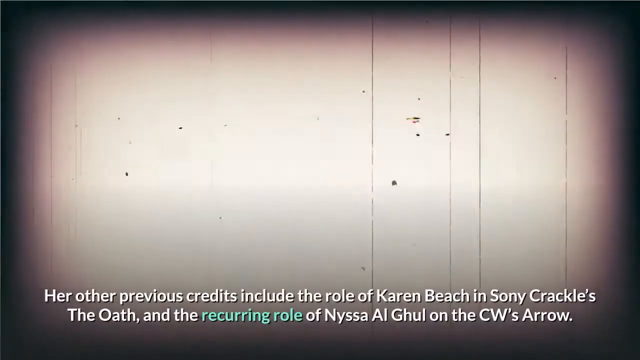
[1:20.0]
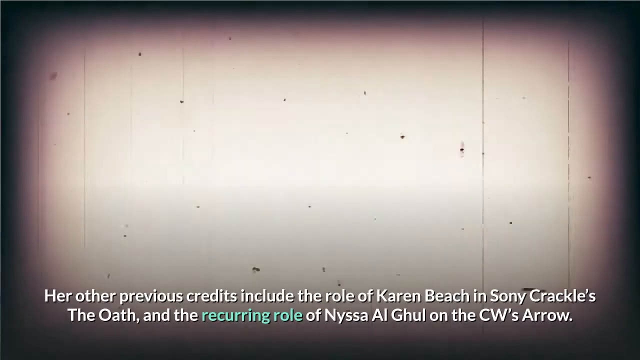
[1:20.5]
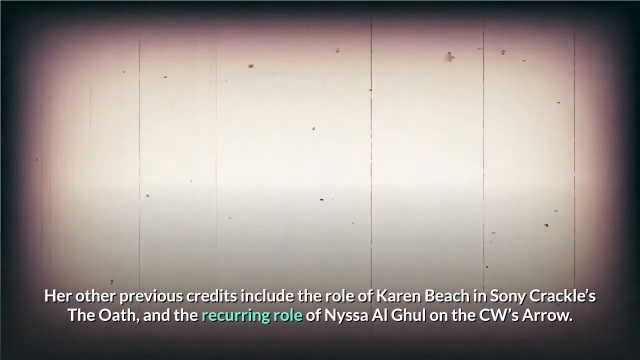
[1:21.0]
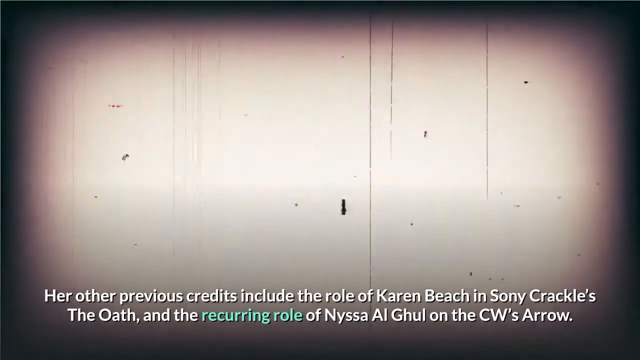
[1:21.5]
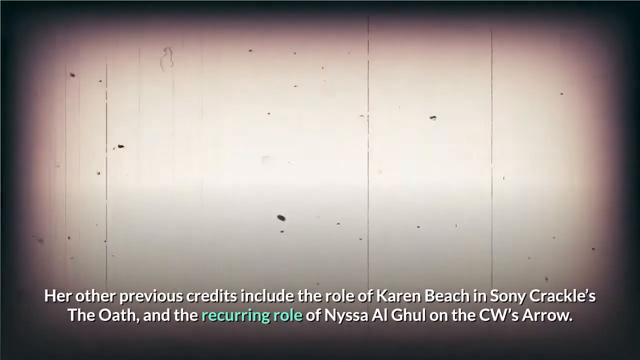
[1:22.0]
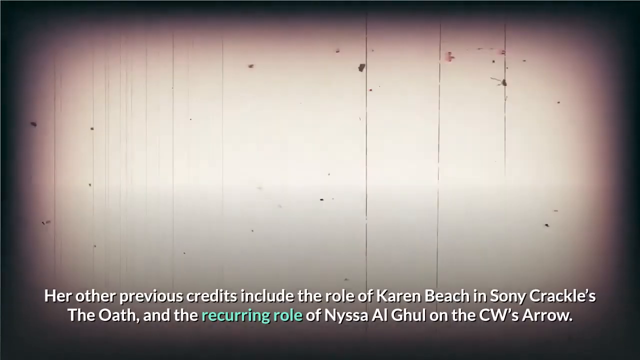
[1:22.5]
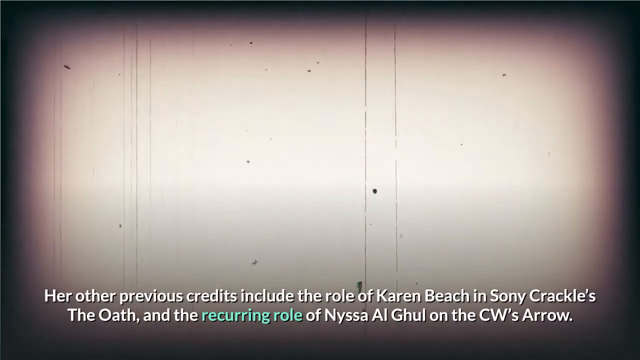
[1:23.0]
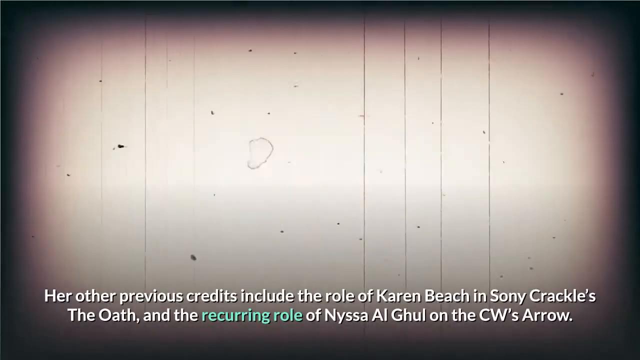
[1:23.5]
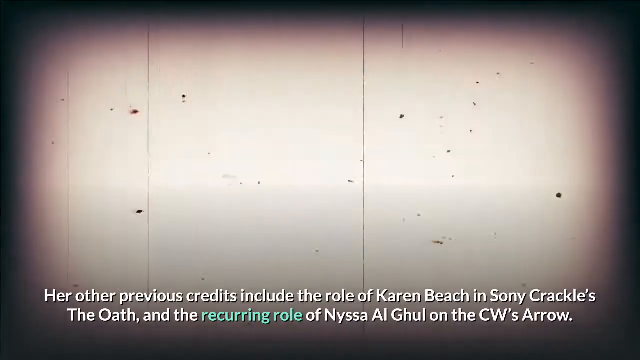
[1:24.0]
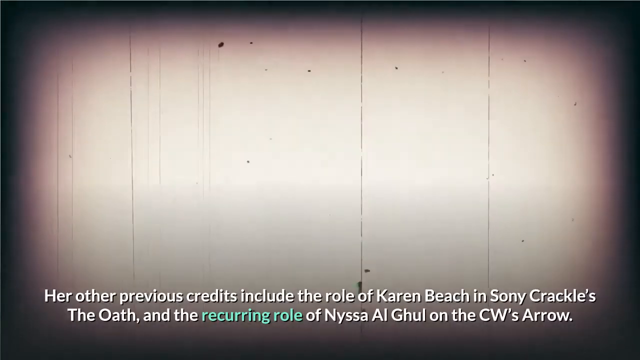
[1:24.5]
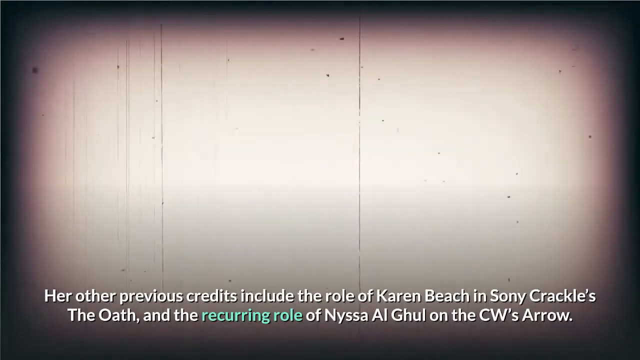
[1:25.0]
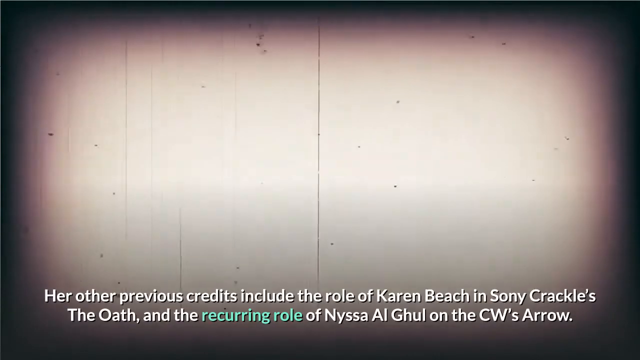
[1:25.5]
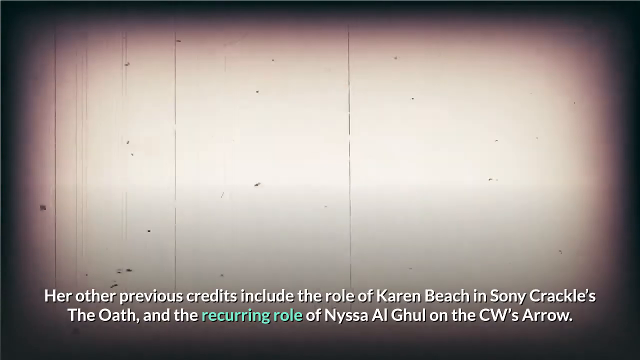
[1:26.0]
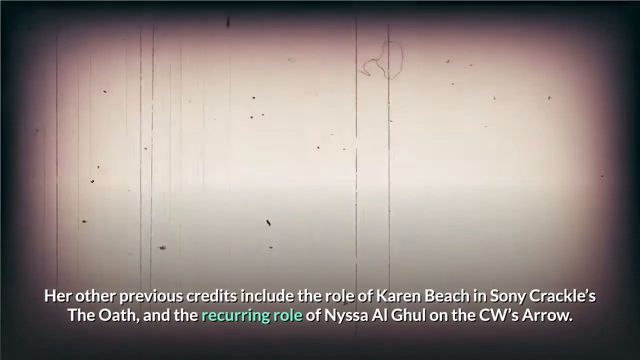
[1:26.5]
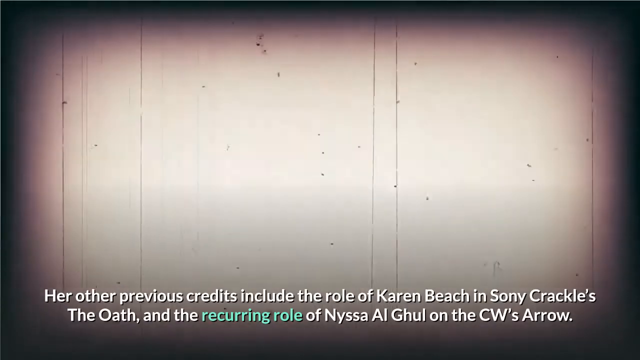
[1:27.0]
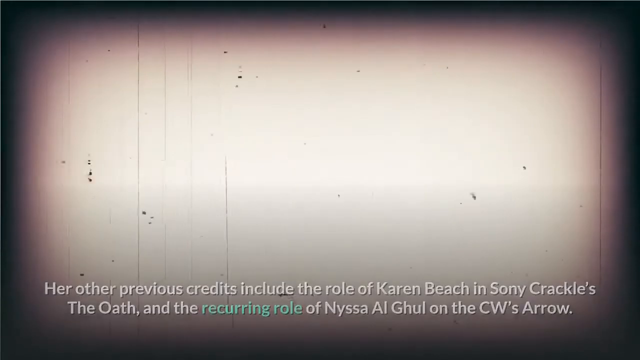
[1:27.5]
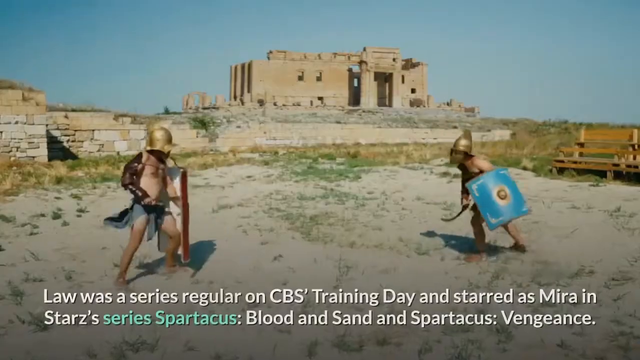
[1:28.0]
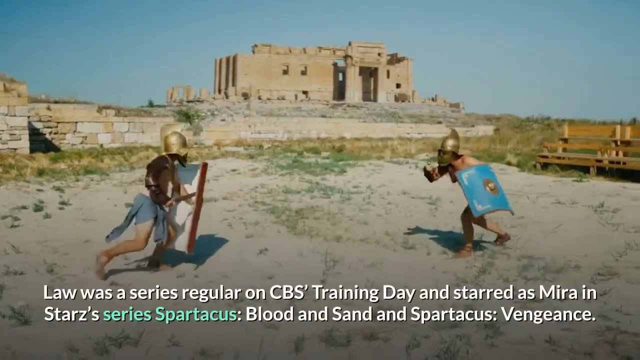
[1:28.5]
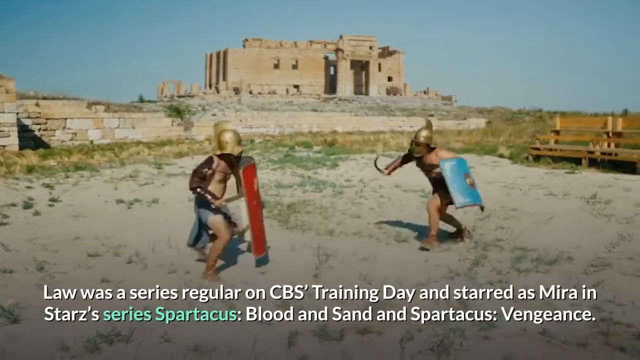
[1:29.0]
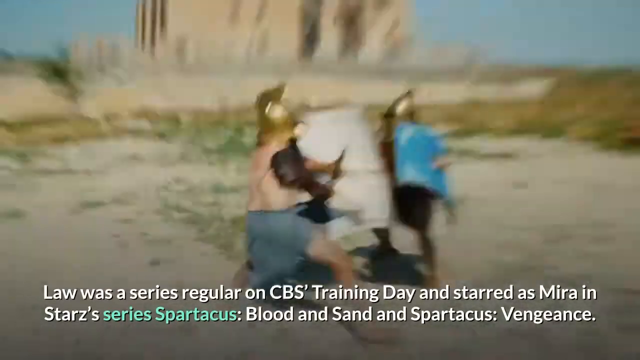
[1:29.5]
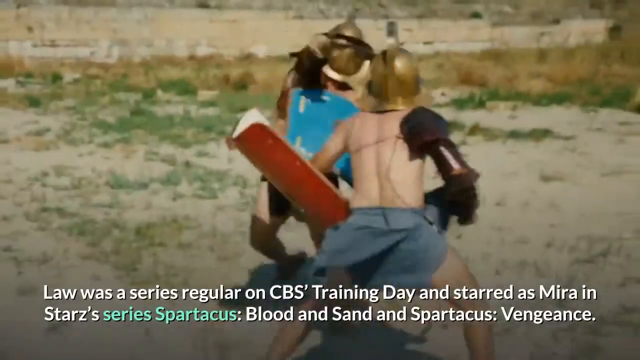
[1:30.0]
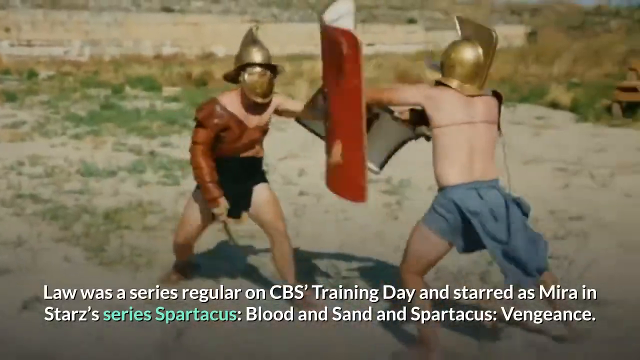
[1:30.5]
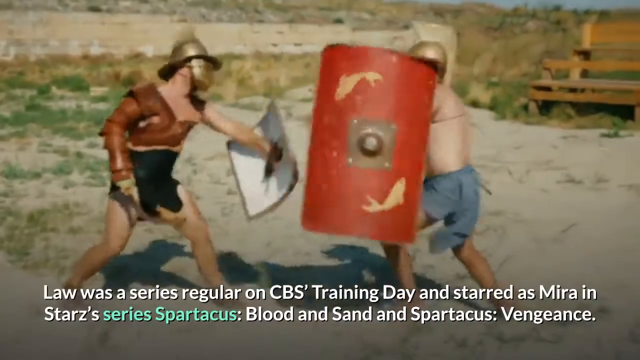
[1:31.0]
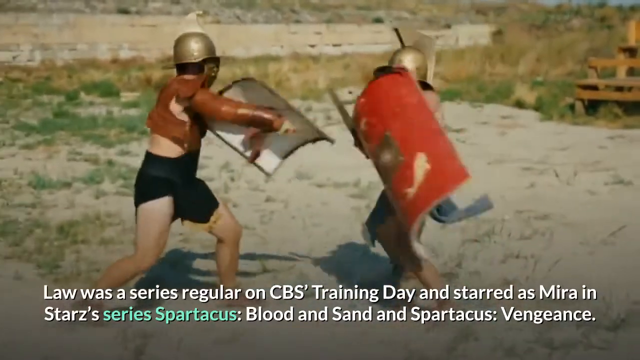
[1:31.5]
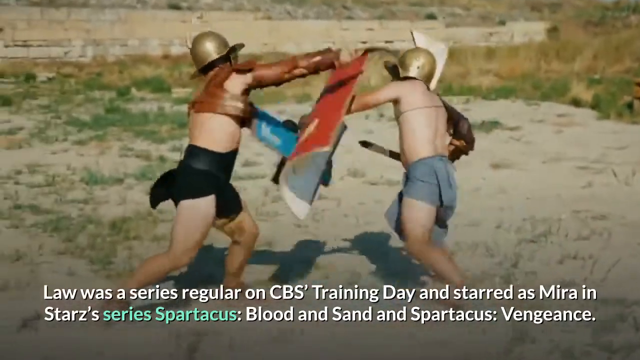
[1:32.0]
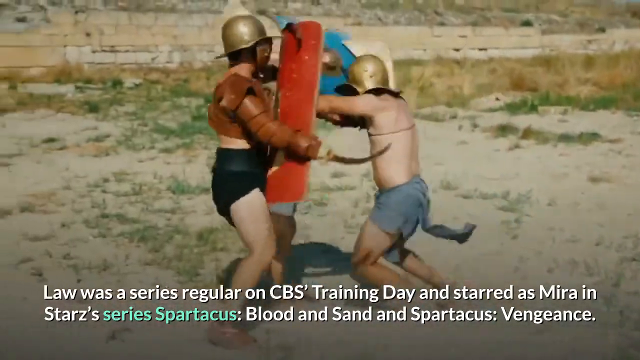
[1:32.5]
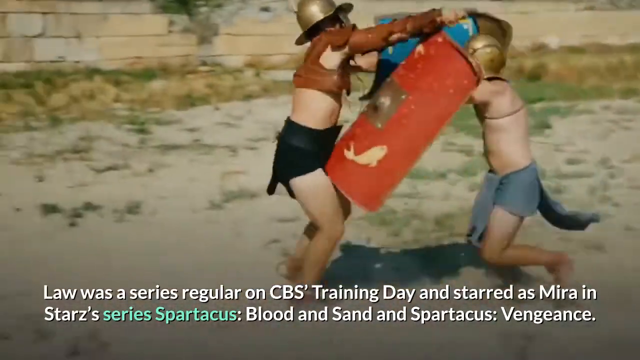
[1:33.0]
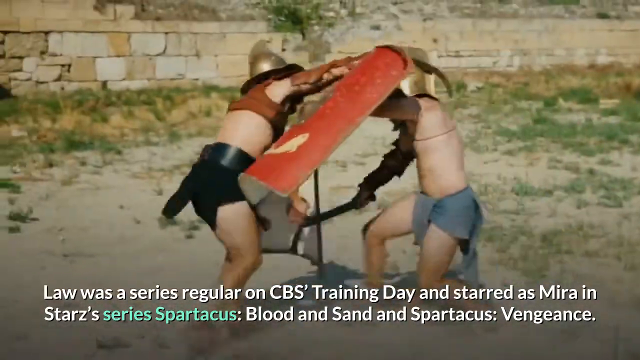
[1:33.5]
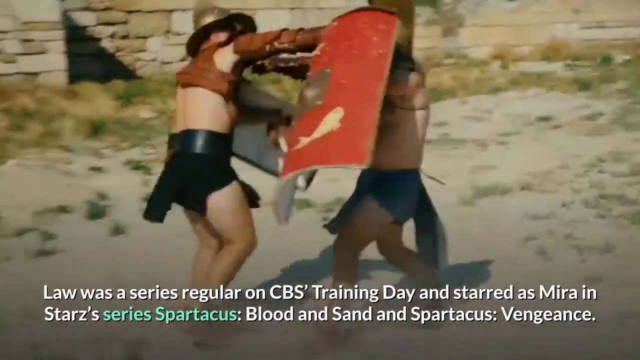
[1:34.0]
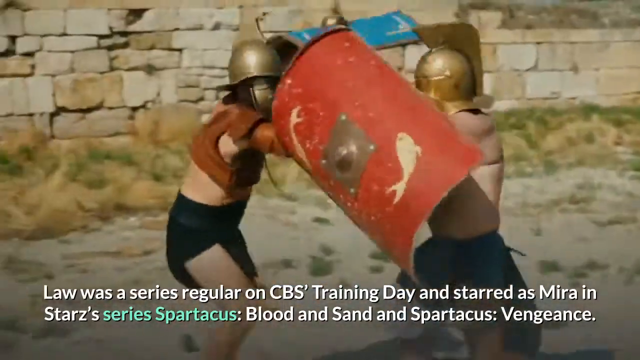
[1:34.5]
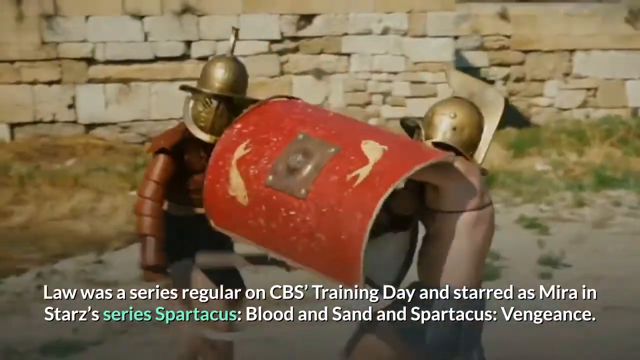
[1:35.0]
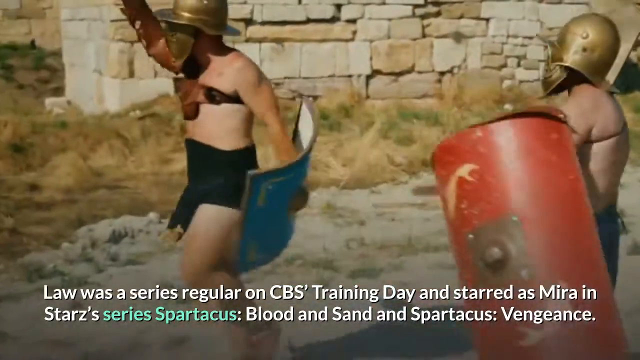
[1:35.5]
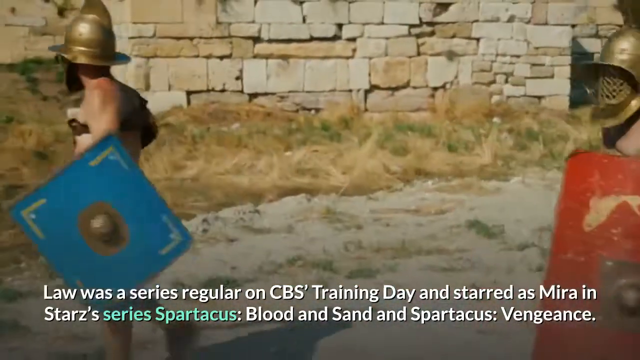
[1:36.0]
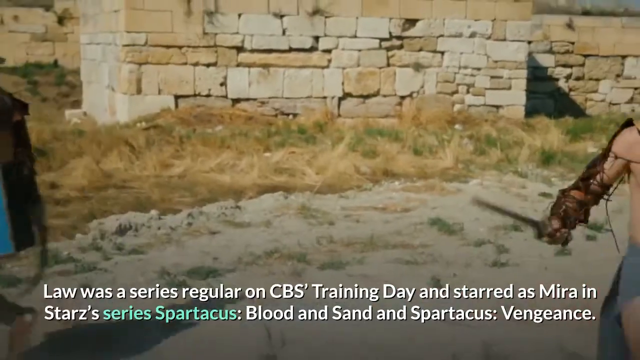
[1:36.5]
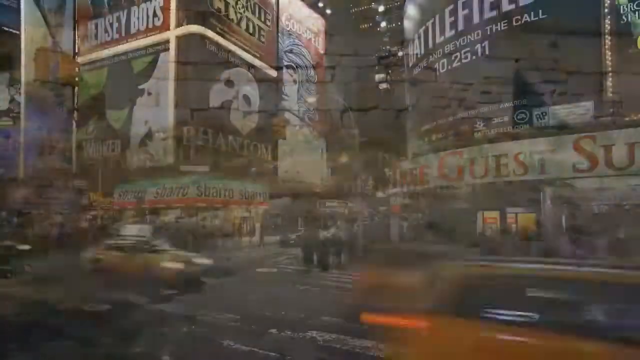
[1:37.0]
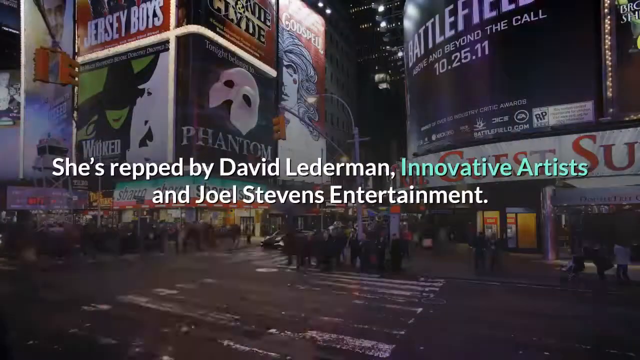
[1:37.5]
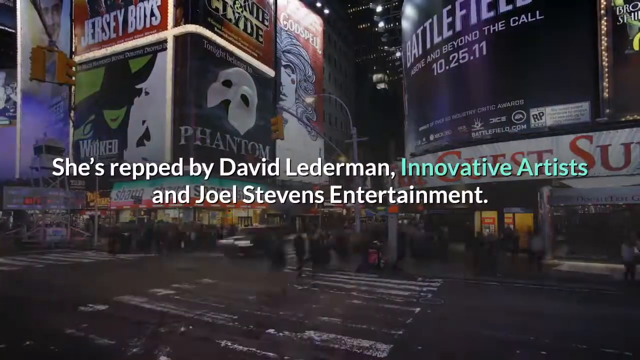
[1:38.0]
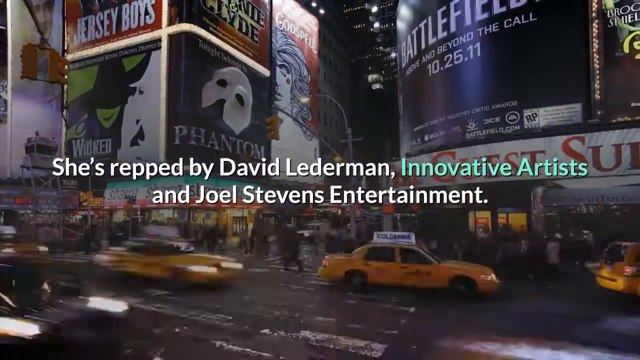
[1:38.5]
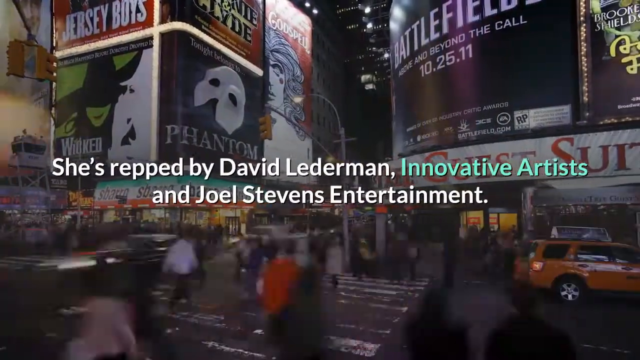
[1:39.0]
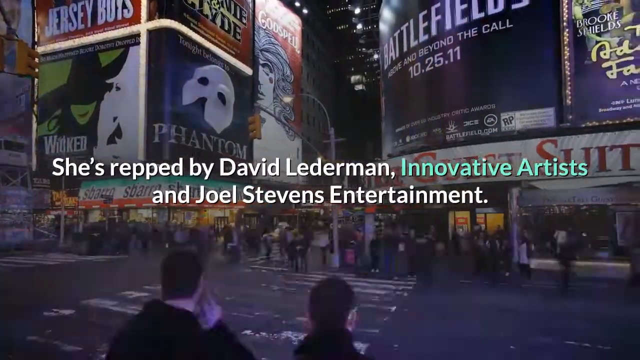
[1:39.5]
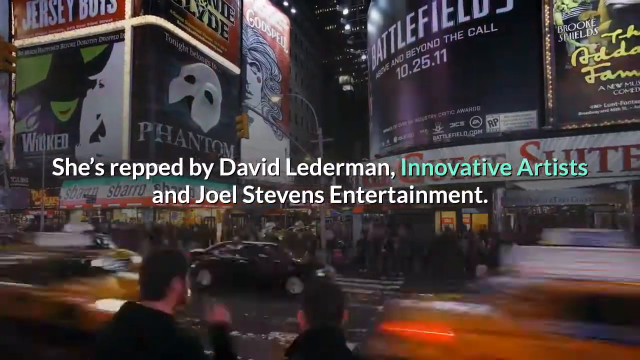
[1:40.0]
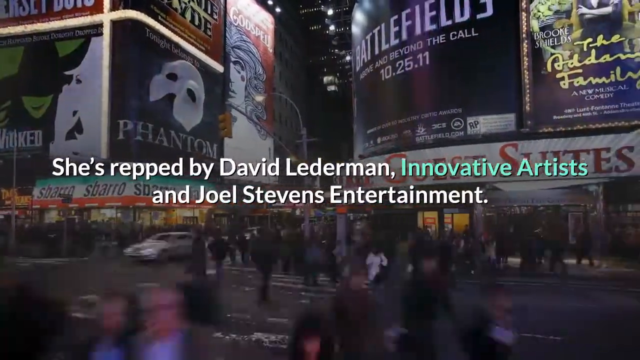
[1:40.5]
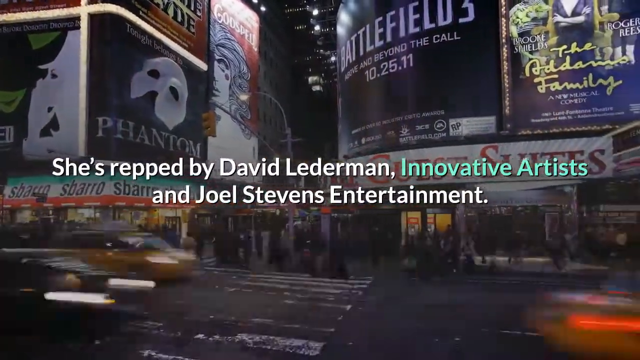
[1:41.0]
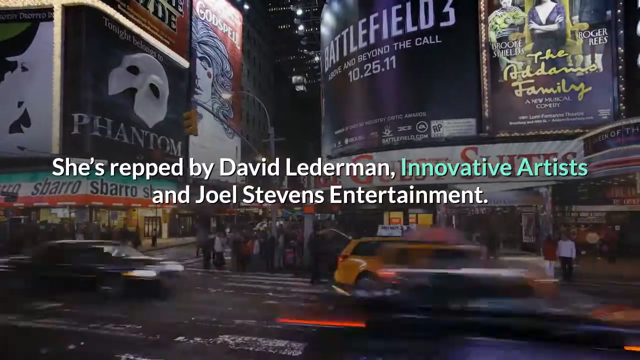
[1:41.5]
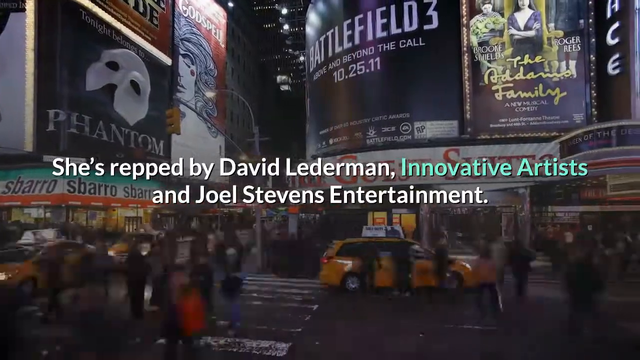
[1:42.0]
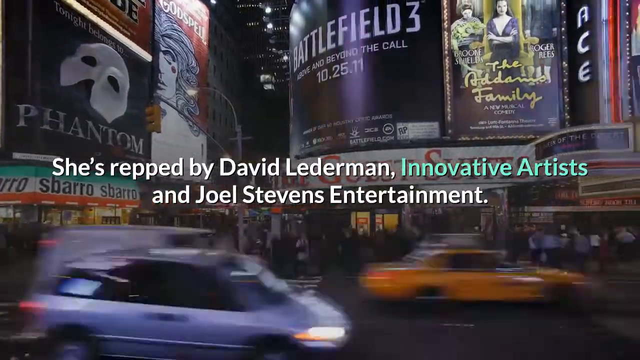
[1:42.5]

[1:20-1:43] A white screen appears first, looking like film running across it with lines, with text at the bottom of the screen. The scene changes to two people dressed as Spartans having a mock duel in front of the ruins of an old Coliseum-looking building. They have shields and wooden swords and are in sand, in the grassy area in front of the old ruins. Next is a downtown scene of New York City at night, with billboards on the walls, including Wicked, Phantom of the Opera, Bonnie and Clyde, and Jersey Boys, among several others. Traffic travels up and down the streets and pedestrians walk on the sidewalks. Text runs along the bottom and middle of the screen about TV shows, while the stock footage in the background has little to do with it.